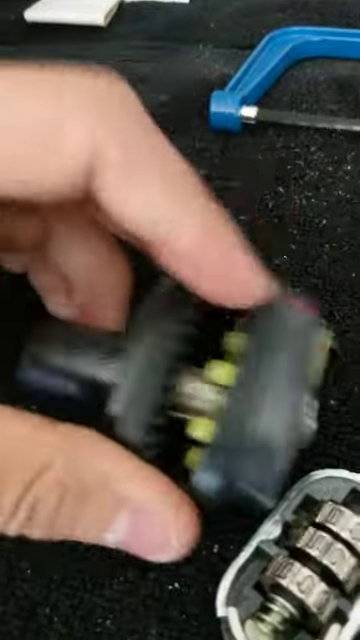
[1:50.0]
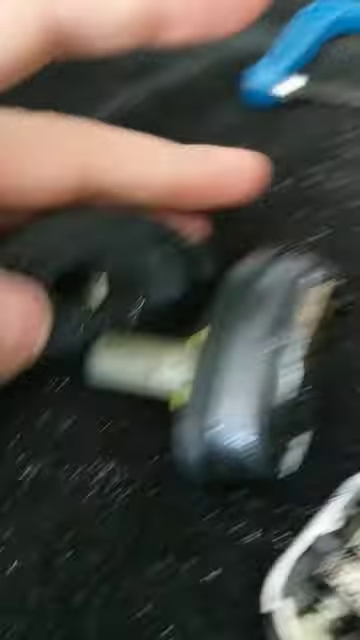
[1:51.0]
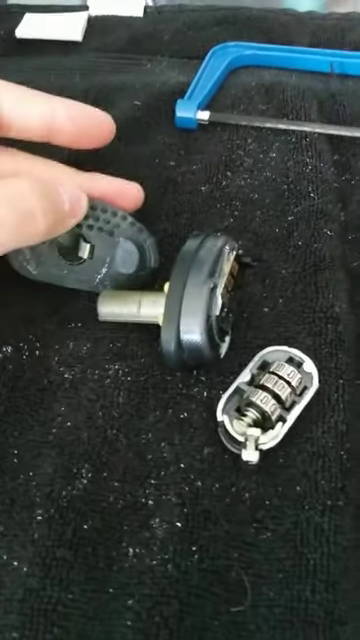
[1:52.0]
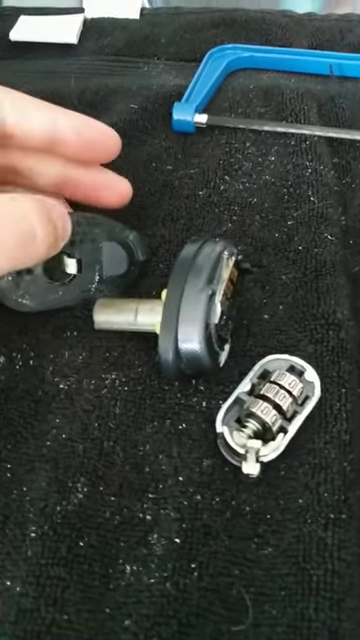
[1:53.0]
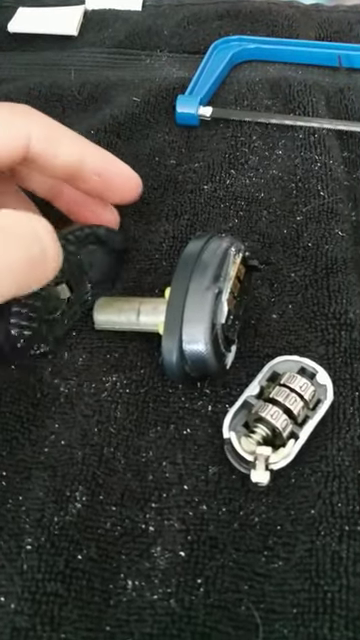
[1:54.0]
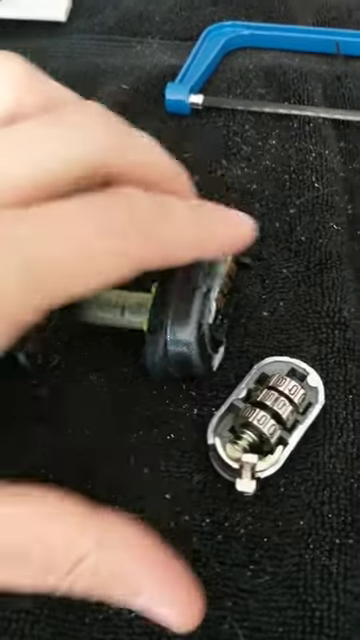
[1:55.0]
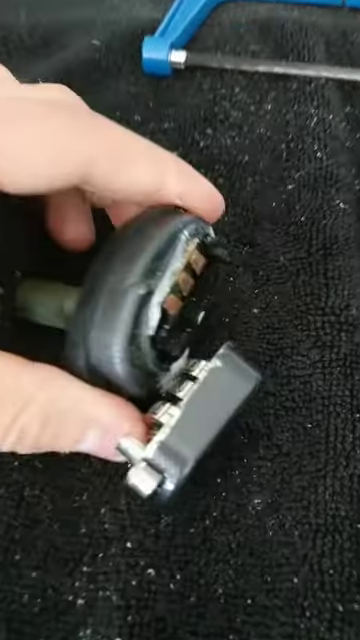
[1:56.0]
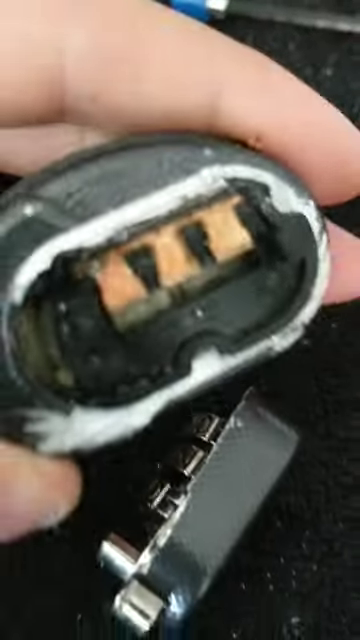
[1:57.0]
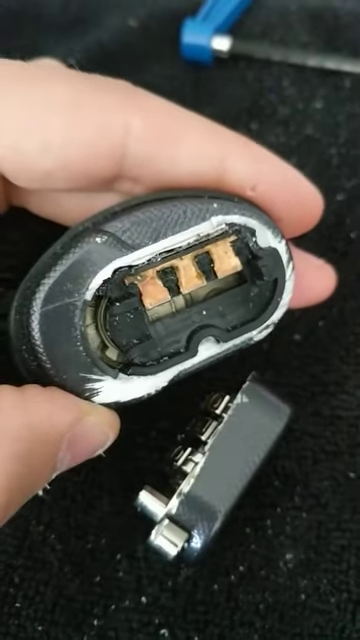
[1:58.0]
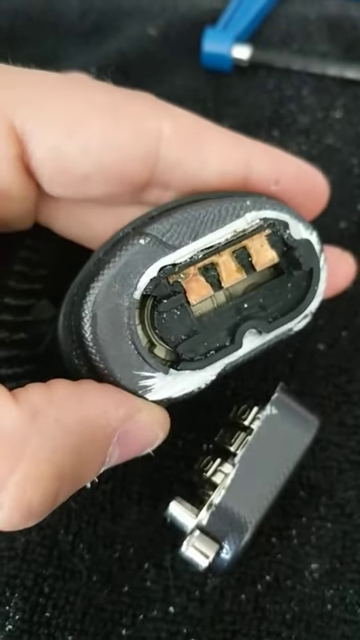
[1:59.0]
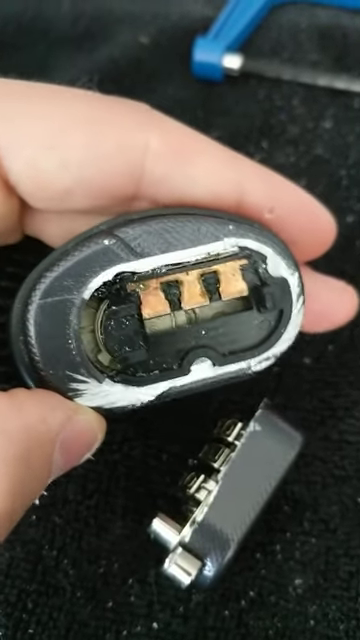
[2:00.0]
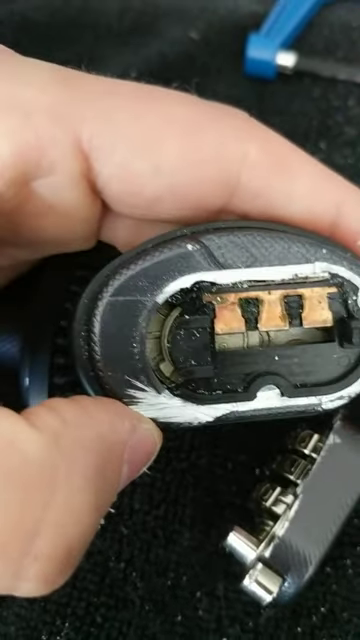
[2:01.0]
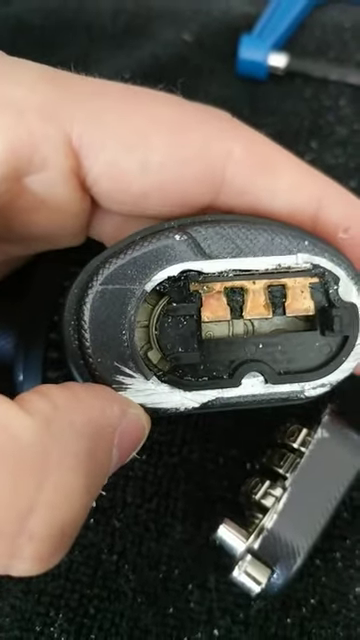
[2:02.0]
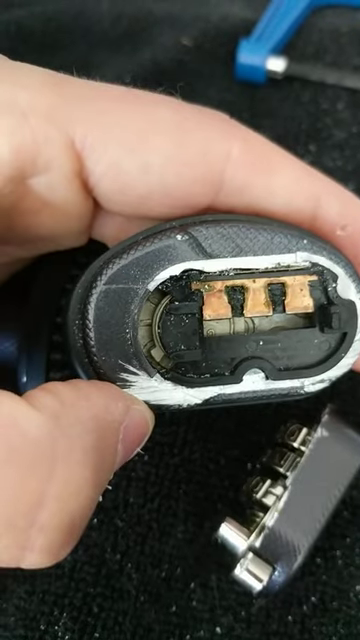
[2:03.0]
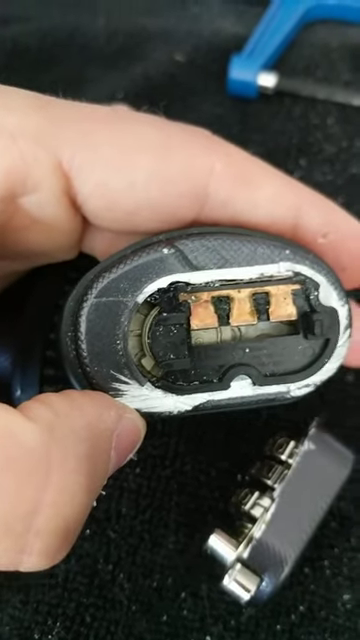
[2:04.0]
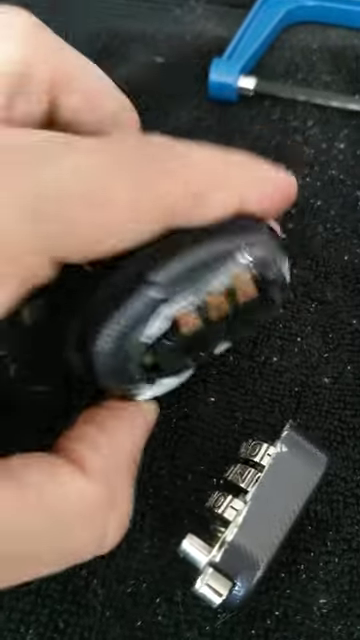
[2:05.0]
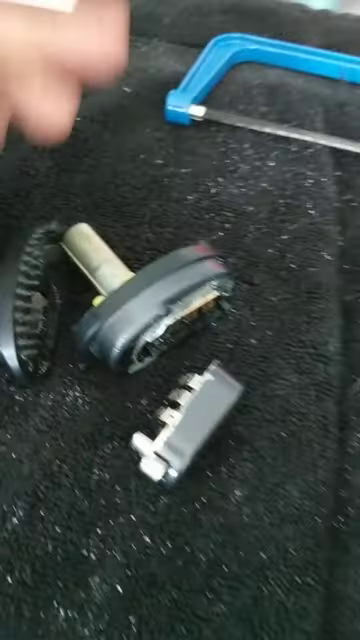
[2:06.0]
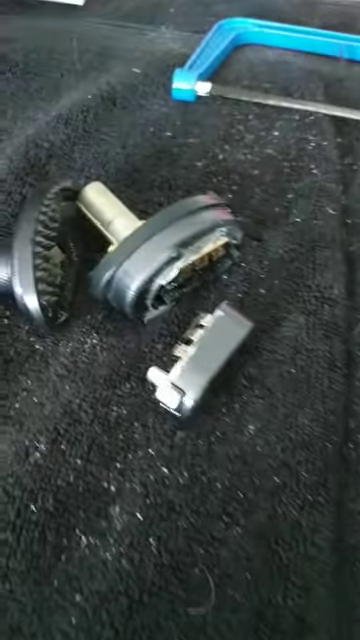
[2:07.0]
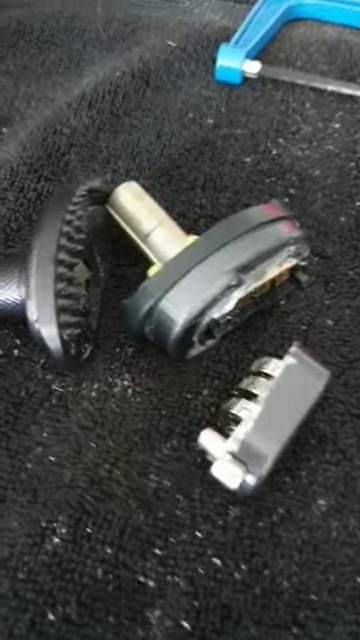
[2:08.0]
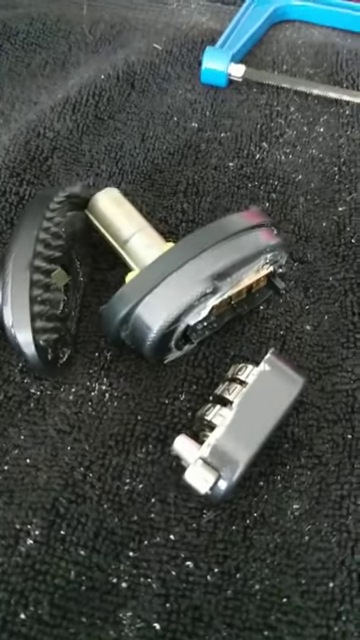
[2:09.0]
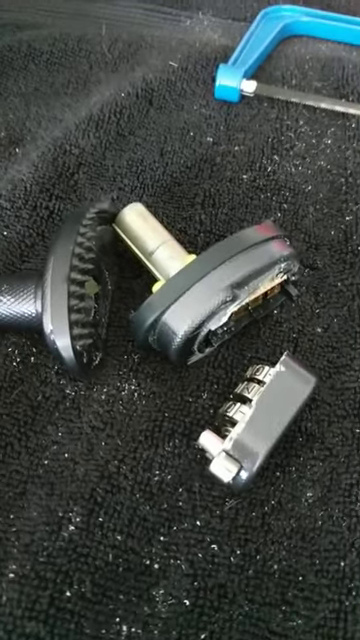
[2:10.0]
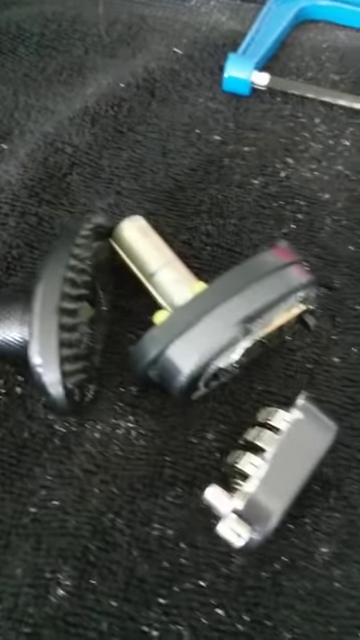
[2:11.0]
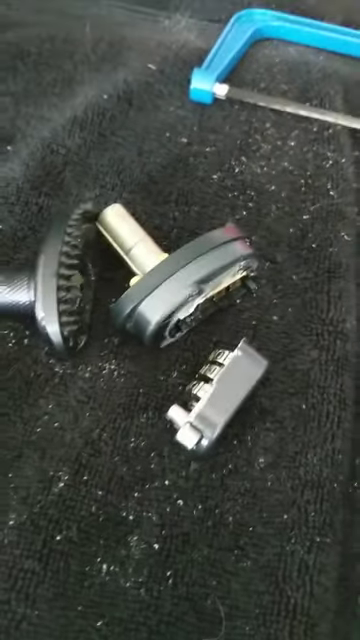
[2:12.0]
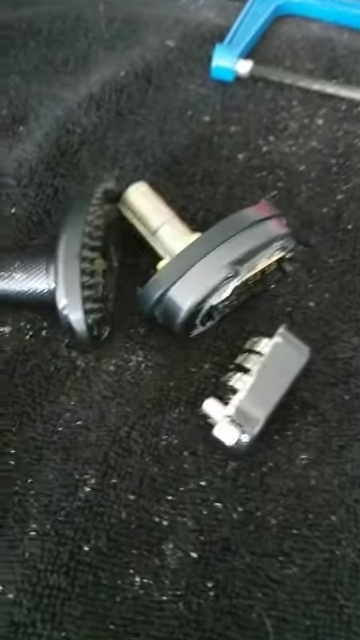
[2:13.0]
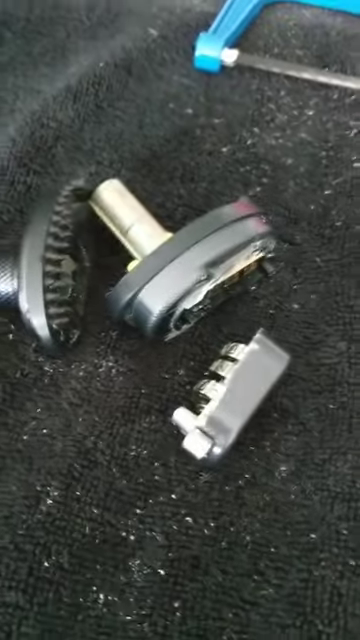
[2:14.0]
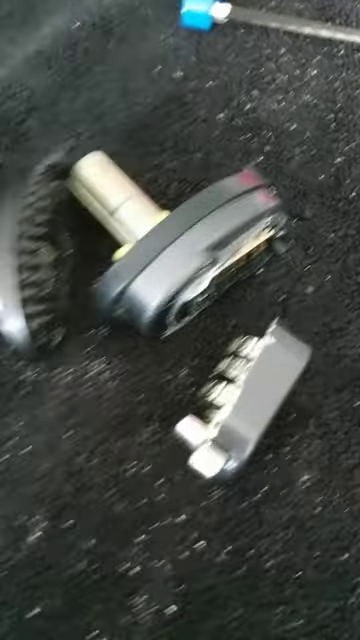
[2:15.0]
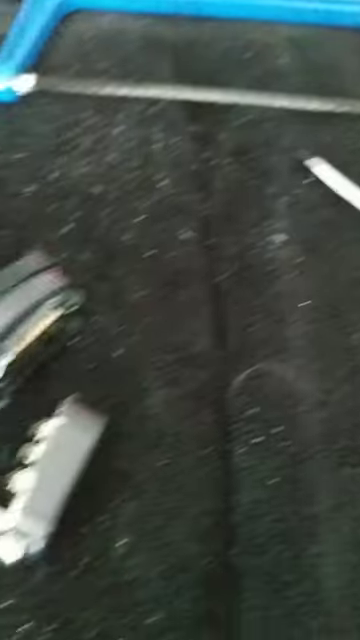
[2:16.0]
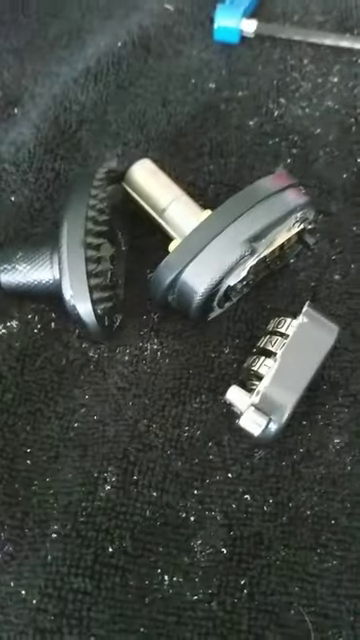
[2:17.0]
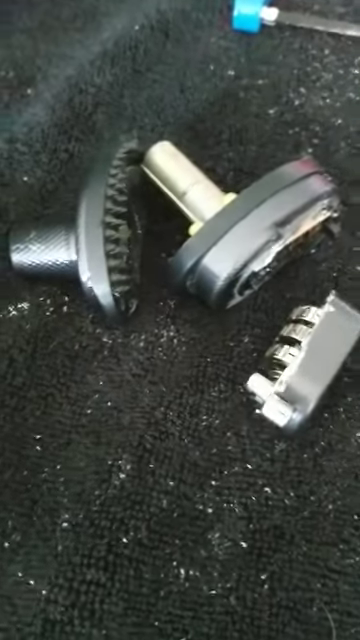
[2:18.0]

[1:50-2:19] The finger dismantles the larger chunk of the damaged key lock: the black handle is separated from the top, revealing a metal-like inside. All three parts are placed side by side on the black, uneven background. In the top left corner is the black part of the damaged key lock; in the middle is the metallic part with the motherboard underneath and a yellow-looking object at its top; and beside it is the smallest metallic chunk with a protruding knob and three rows of numbering, also on the uneven black background. In the top right is half of the hacksaw with a blue handle. The finger grabs the middle section, flips it to show the motherboard underneath, and places it back on the black background. The camera briefly zooms over to the screwdriver with a red handle and black linings, then zooms back to the damaged key lock, now broken into three pieces on the black background.